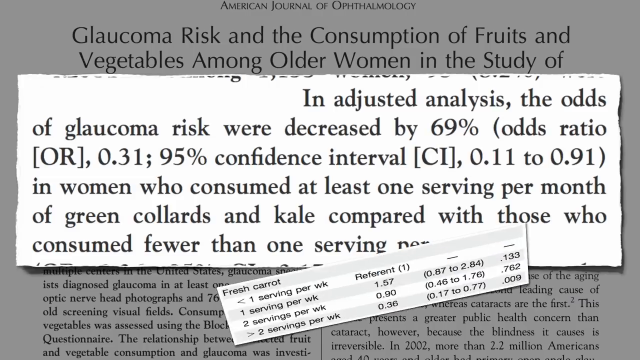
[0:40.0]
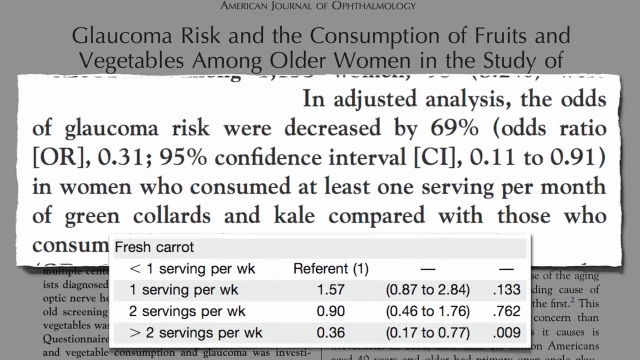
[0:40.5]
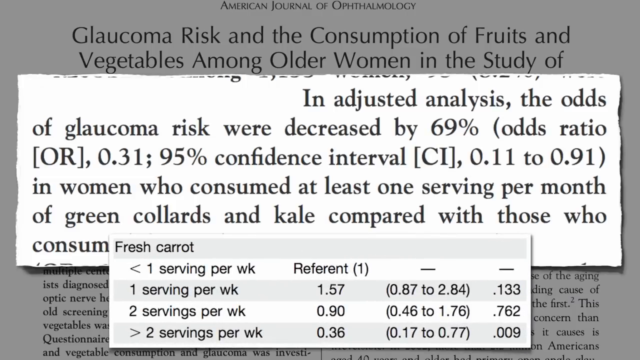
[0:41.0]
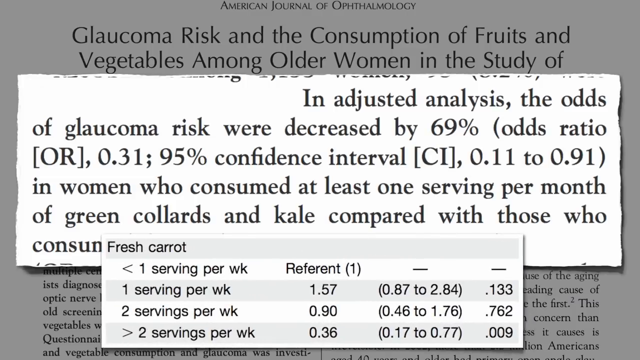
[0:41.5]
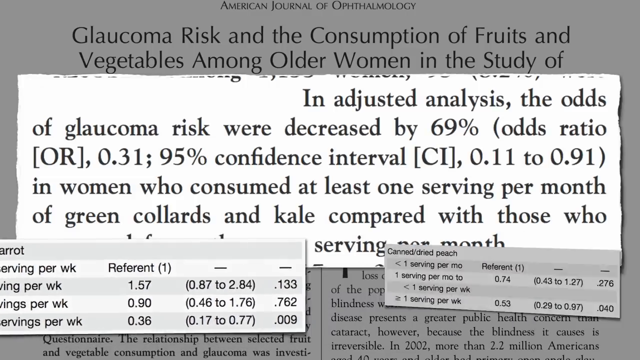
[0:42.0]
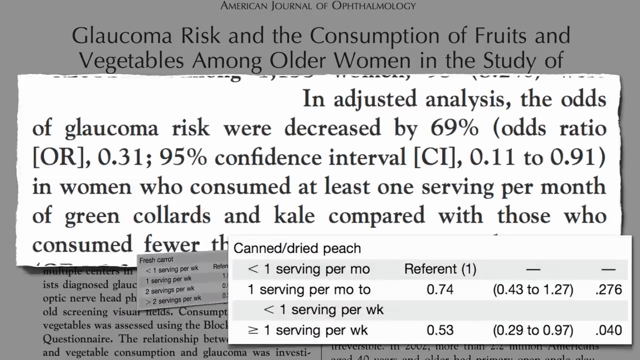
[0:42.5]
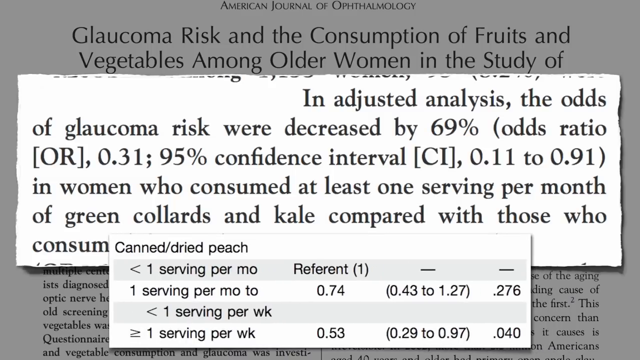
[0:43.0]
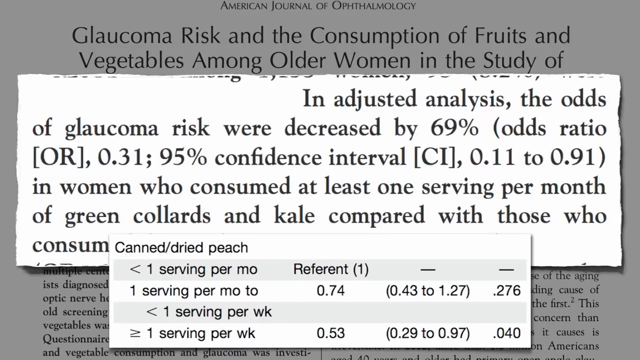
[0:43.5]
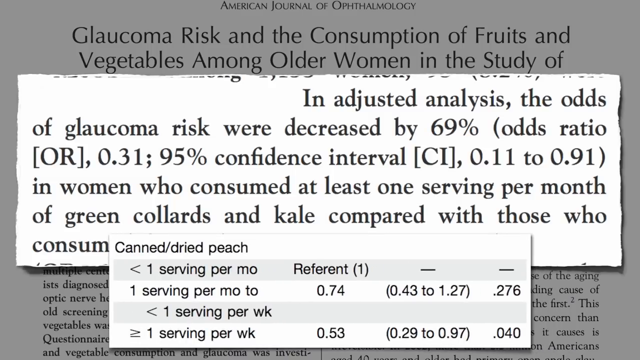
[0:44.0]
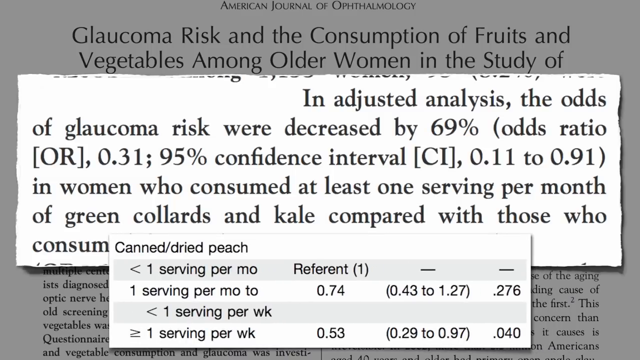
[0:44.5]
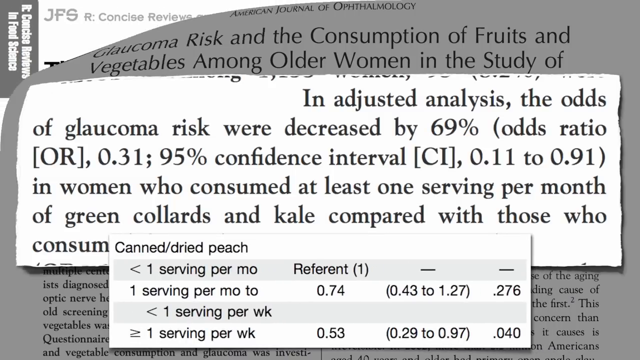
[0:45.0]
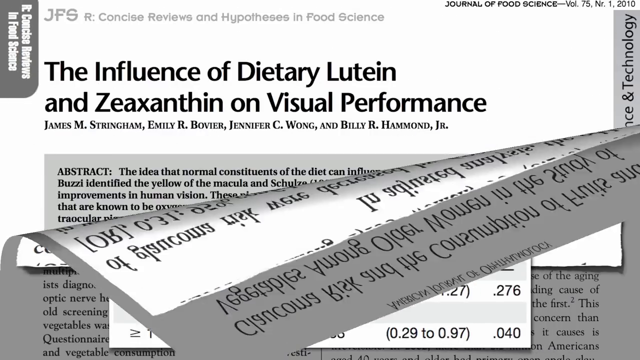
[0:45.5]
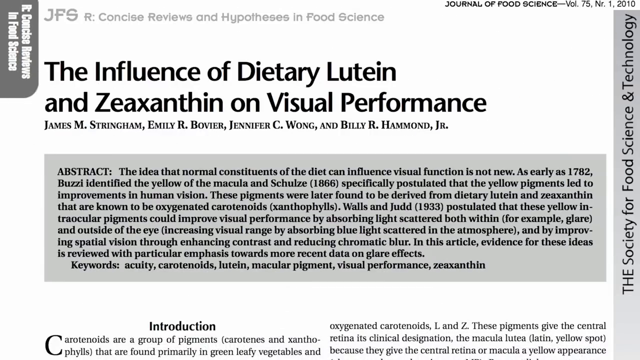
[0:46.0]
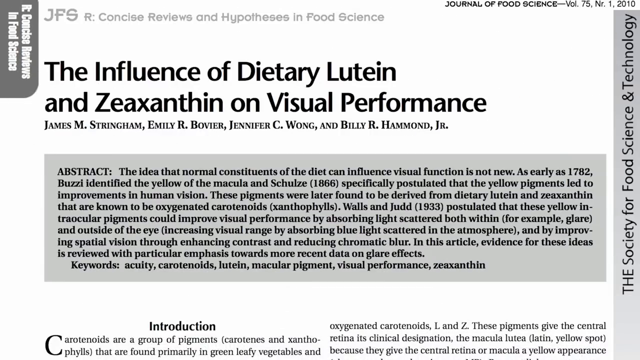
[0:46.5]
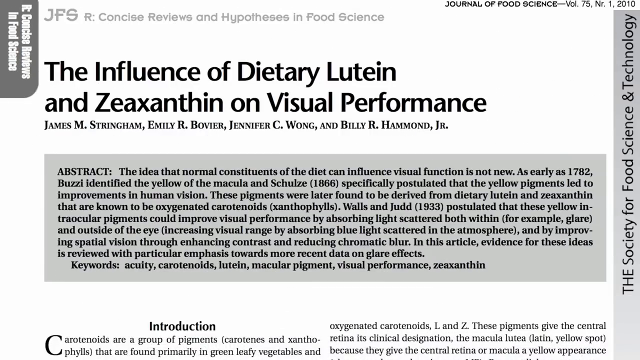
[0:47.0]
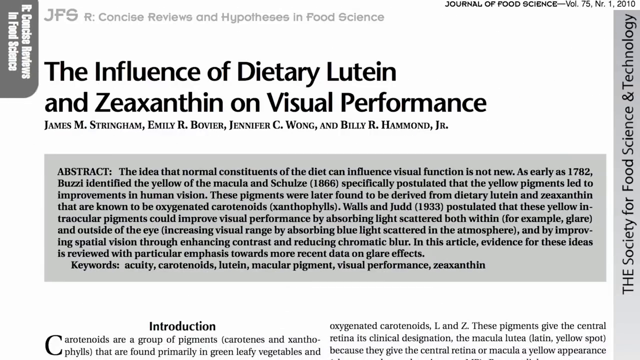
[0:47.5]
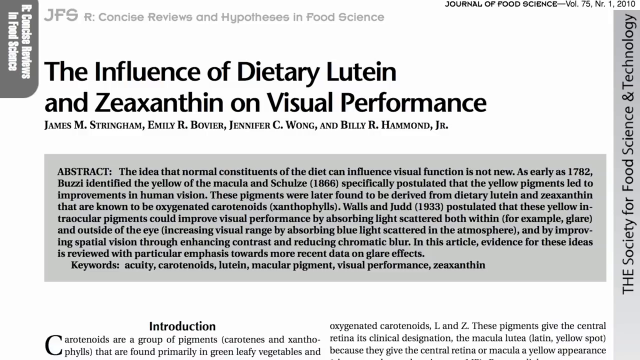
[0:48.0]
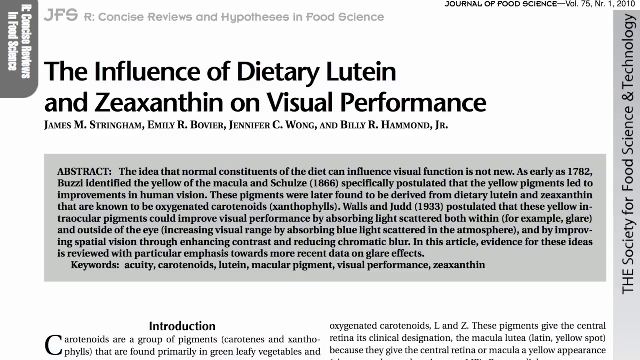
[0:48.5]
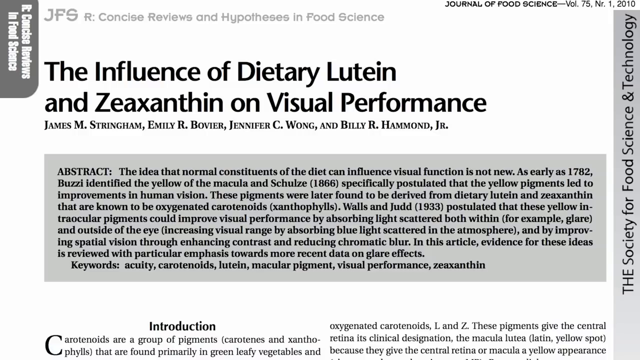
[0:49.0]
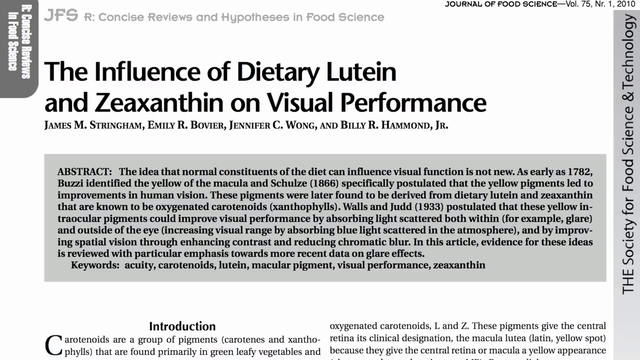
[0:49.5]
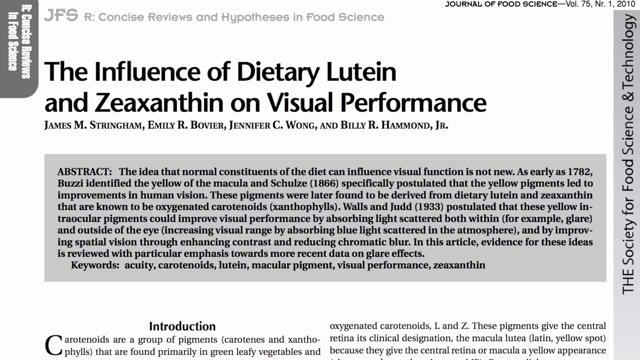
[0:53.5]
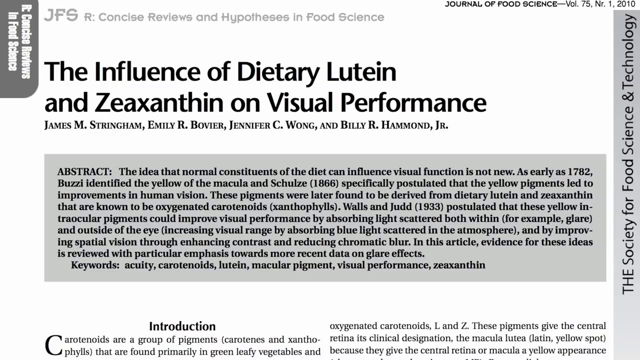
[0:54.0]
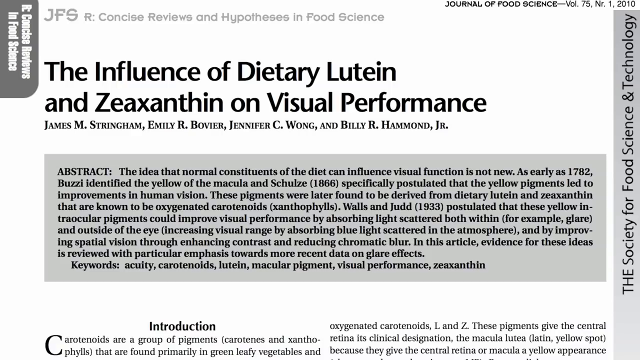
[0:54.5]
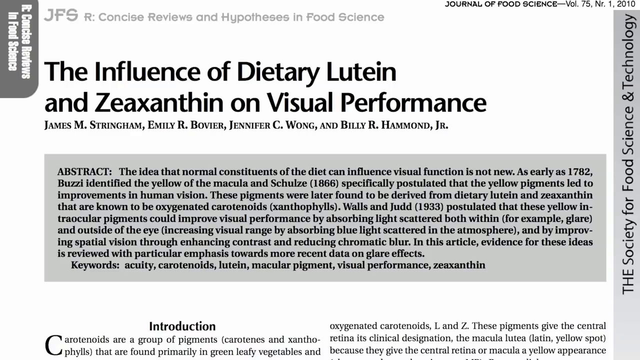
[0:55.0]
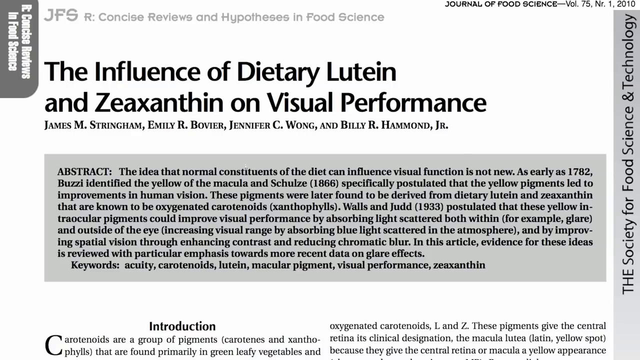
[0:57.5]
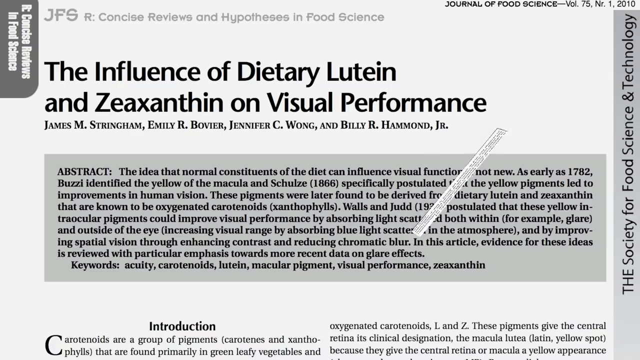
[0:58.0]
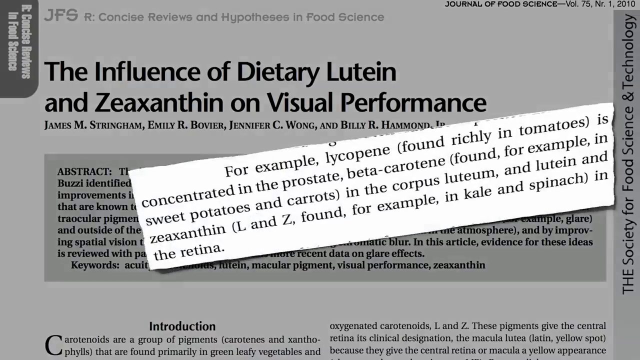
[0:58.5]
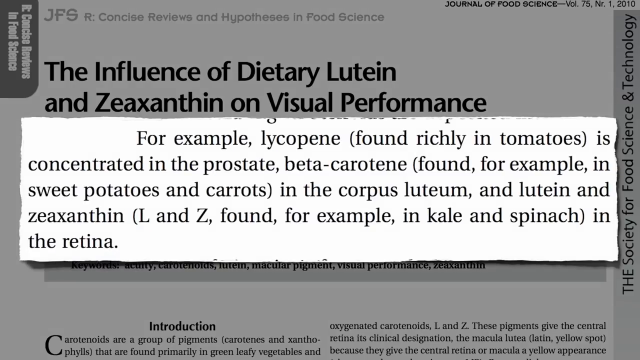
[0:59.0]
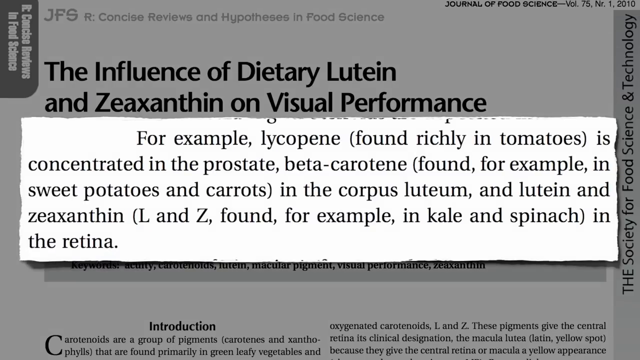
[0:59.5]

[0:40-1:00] A cutout from an article is superimposed over an article, as if it came from that article; it concerns the risks of developing glaucoma in women. The video transitions to another cutout listing canned dried peach and how many servings should be consumed per month and per week. Next comes an article titled "The Influence of Dietary Lutein and Zeaxanthin on Visual Performance." Below the title, in a gray area, is an abstract with a large paragraph of text. Another cutout from an article then appears above that article and reads, "for example, lycopene, found richly in tomatoes, is concentrated in the prostate, beta carotene, found, for example, in sweet potatoes and carrots, in the corpus luteum and lutein, and zeaxanthin, L and Z, found, for example, in kale and spinach, in the retina."